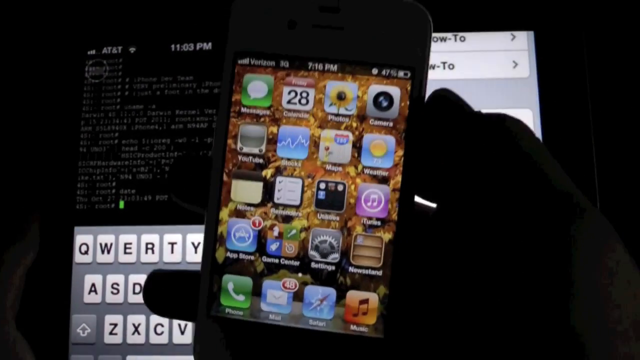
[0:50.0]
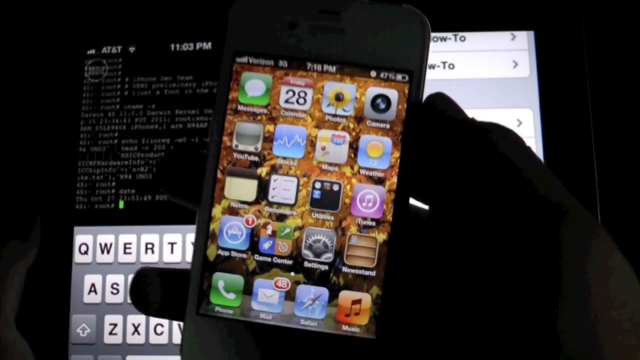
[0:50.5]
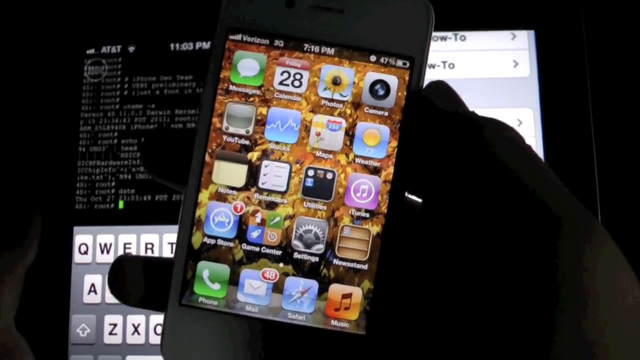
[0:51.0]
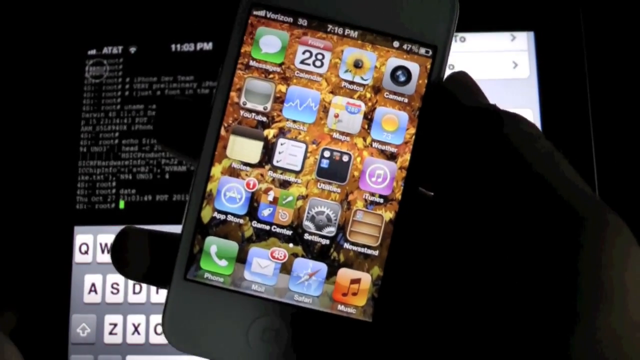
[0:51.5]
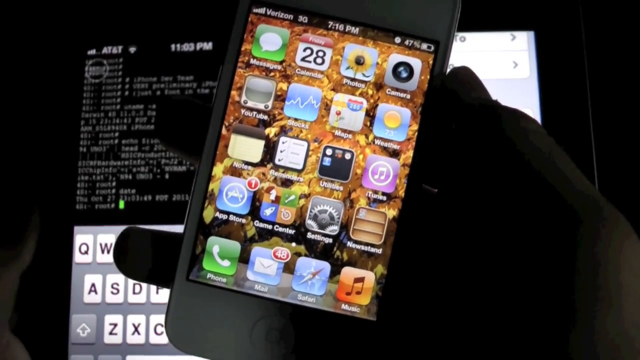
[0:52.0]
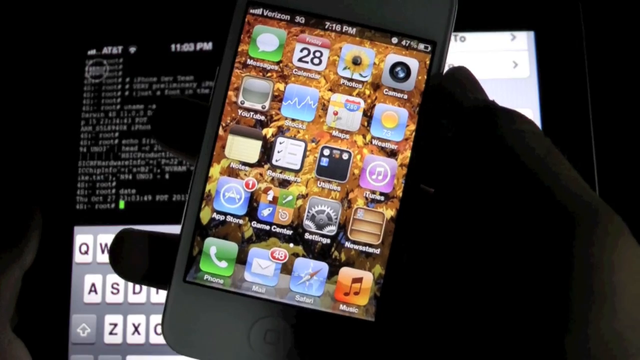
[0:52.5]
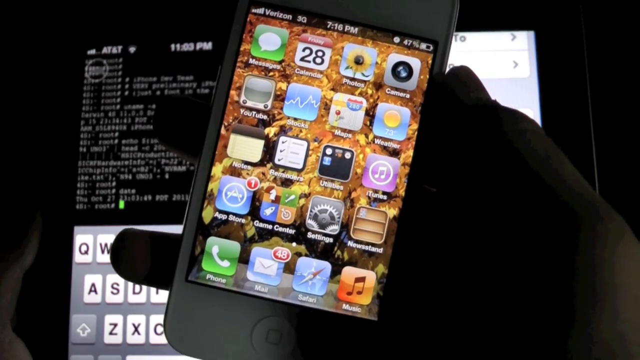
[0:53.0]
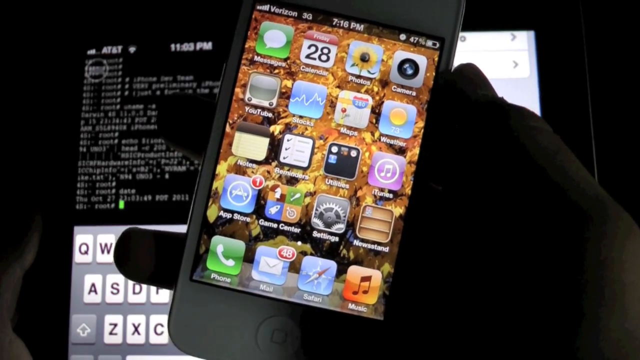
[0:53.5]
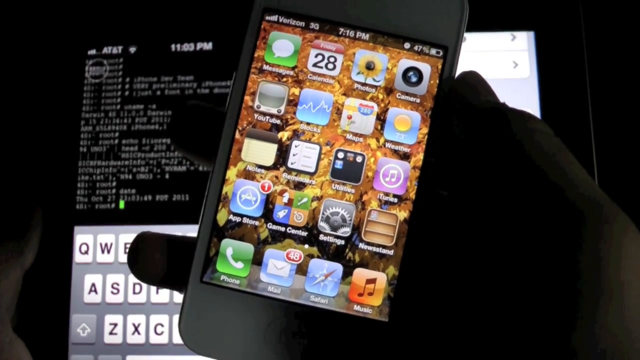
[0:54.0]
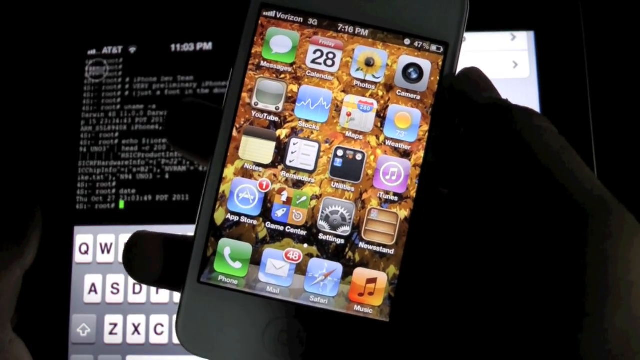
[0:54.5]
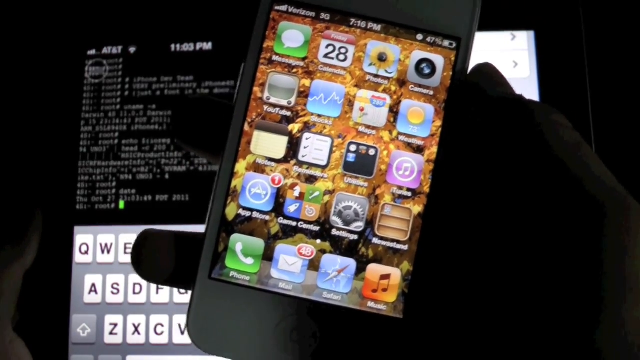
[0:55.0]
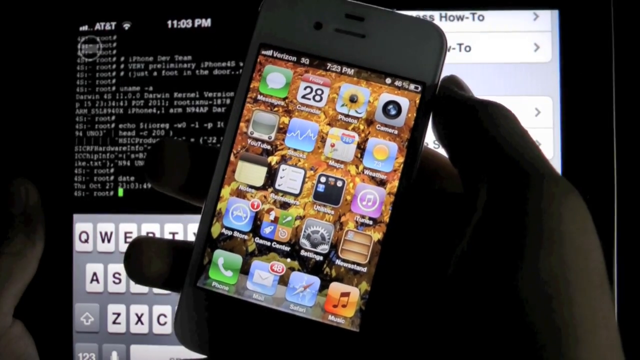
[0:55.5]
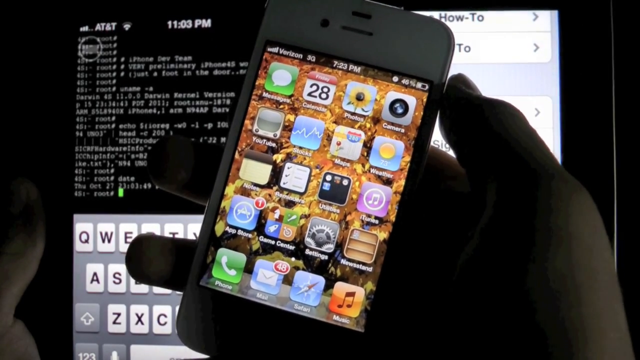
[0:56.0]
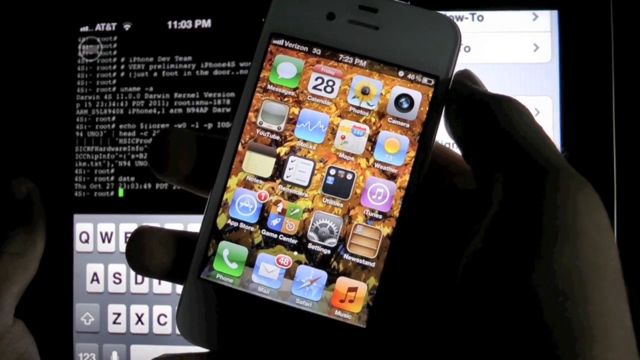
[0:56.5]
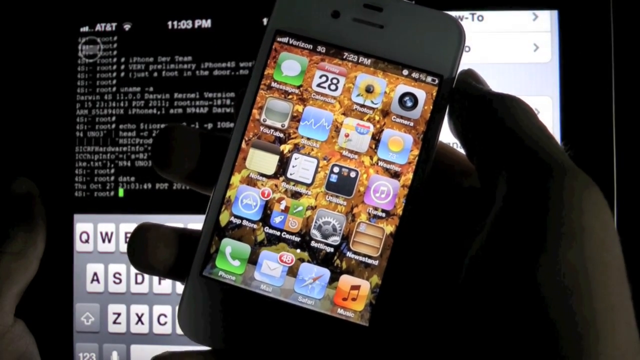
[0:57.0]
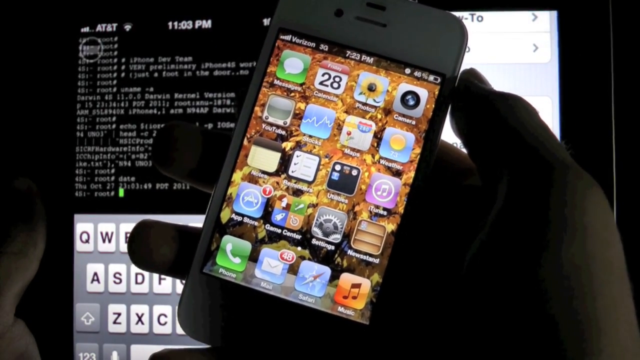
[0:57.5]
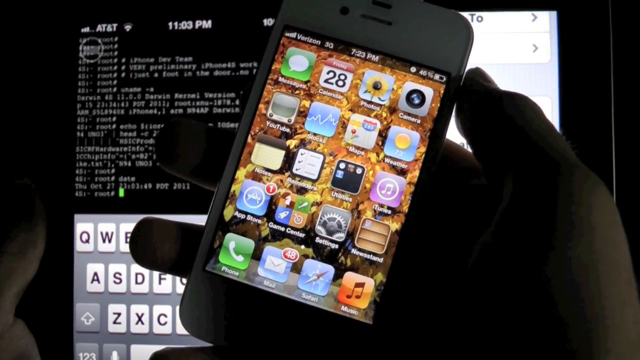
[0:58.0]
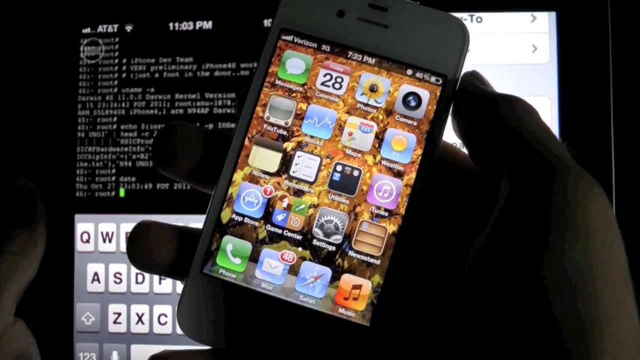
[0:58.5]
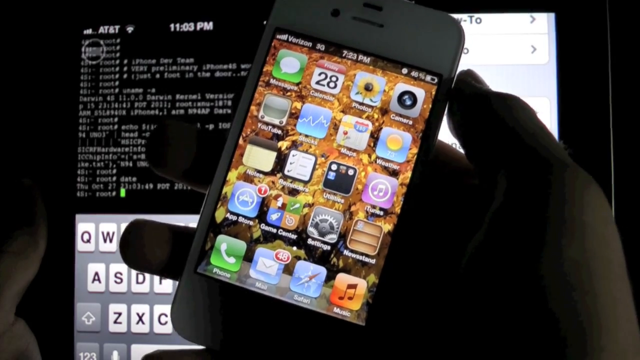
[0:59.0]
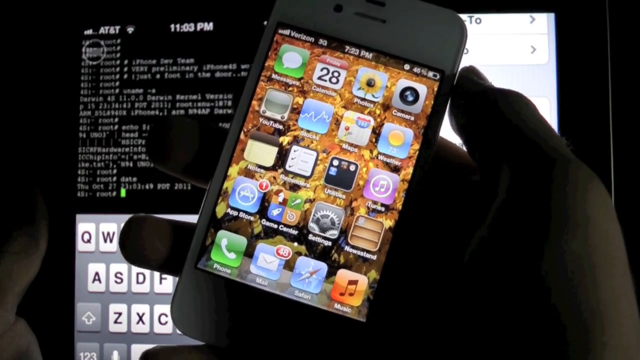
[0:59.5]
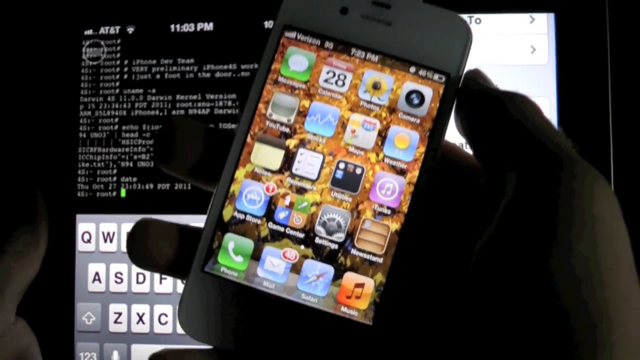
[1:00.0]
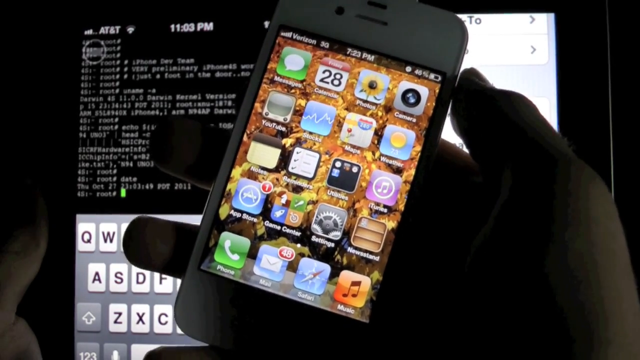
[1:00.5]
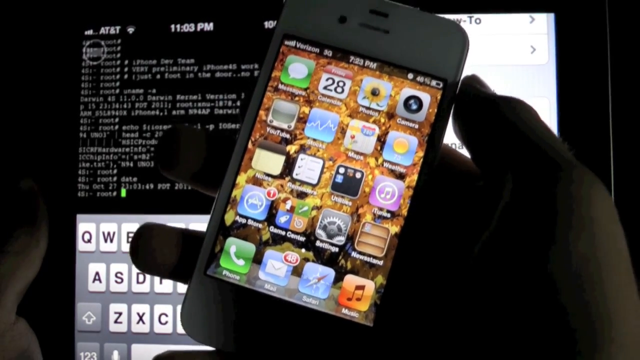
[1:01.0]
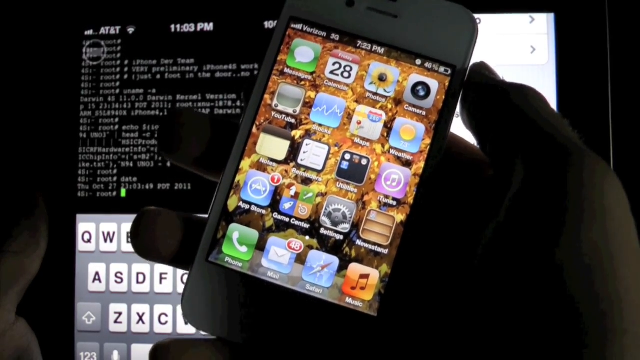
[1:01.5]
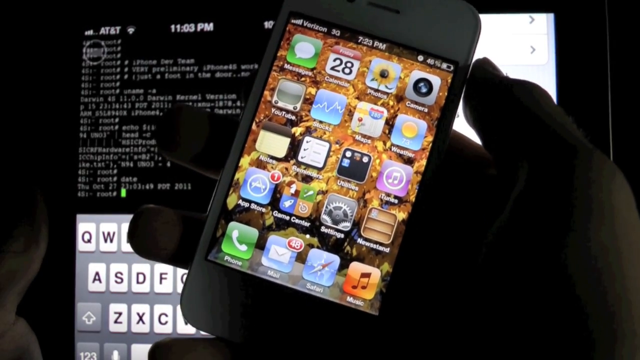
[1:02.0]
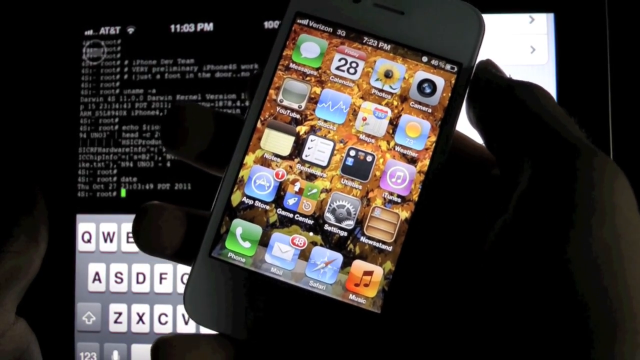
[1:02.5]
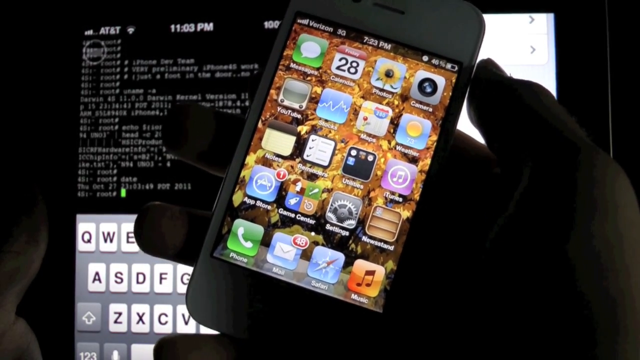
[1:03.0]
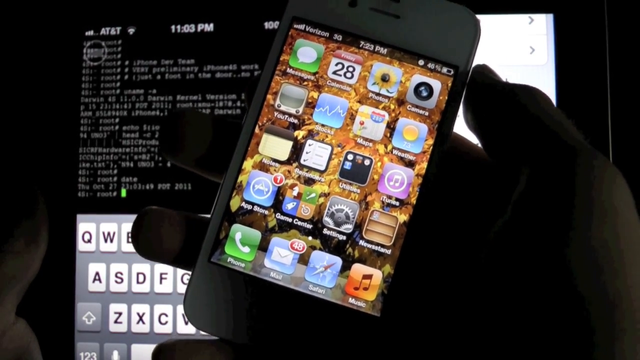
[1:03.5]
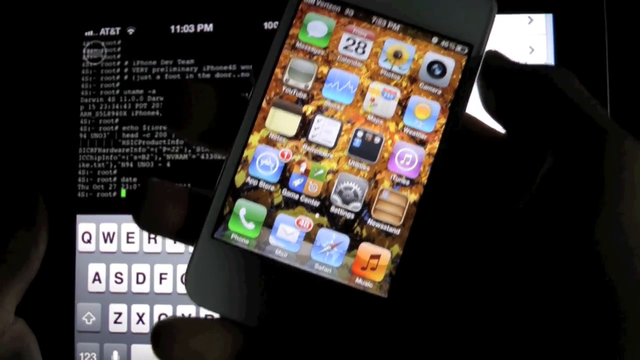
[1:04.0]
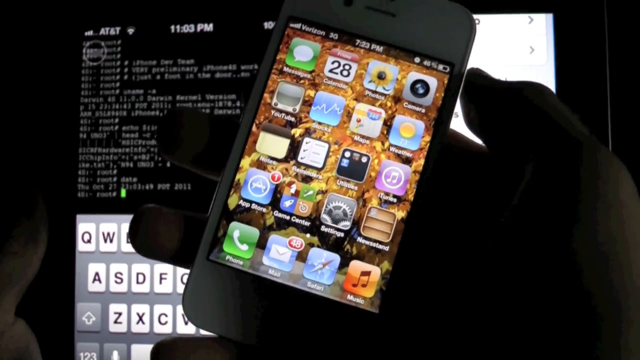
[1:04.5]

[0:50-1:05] He holds the phone again, and it shakes, apparently as he talks. There is a jump cut partway through. Among the apps on the phone, the YouTube app lacks its usual play button and instead has an old-school CRT TV icon: a gray gradient screen, a beige outer casing, and two dials at the bottom left and bottom right. The phone is possibly an iPhone 4. There is also an iTunes app, purple with a music note.